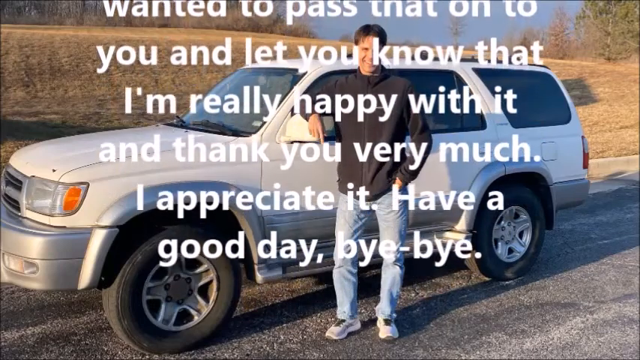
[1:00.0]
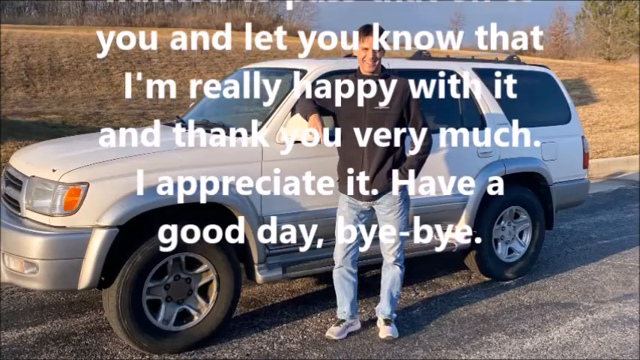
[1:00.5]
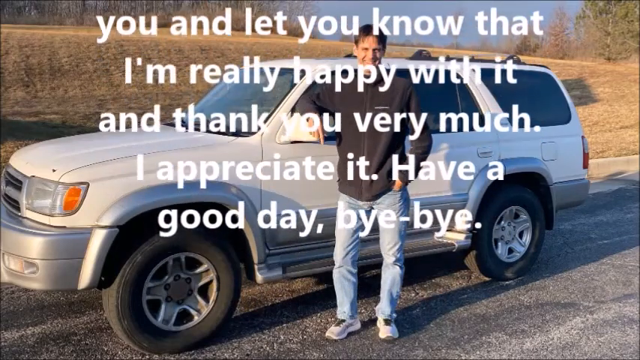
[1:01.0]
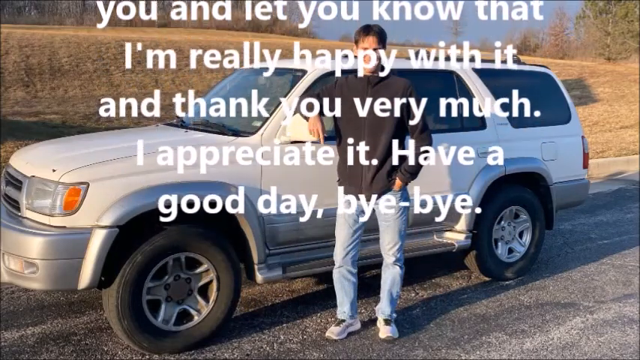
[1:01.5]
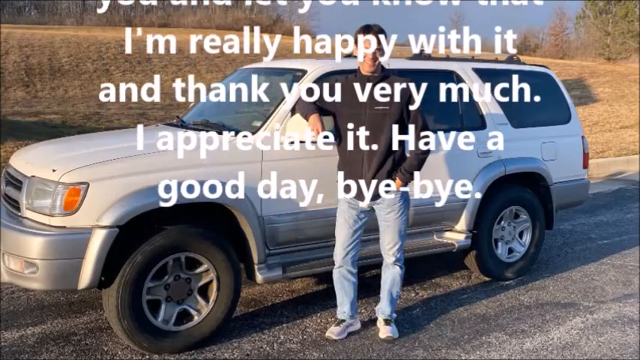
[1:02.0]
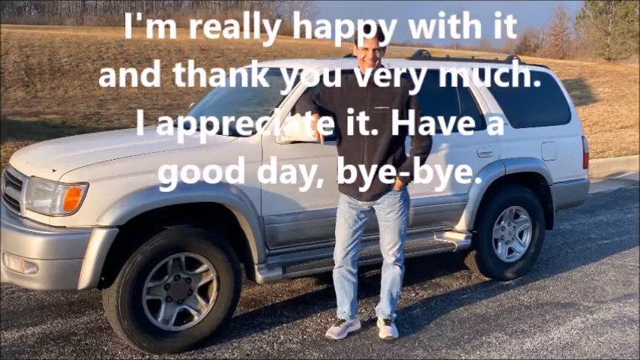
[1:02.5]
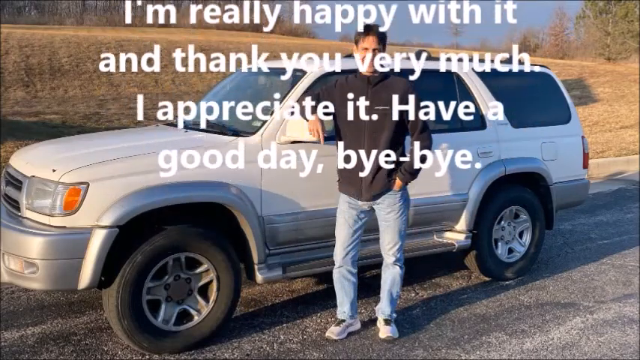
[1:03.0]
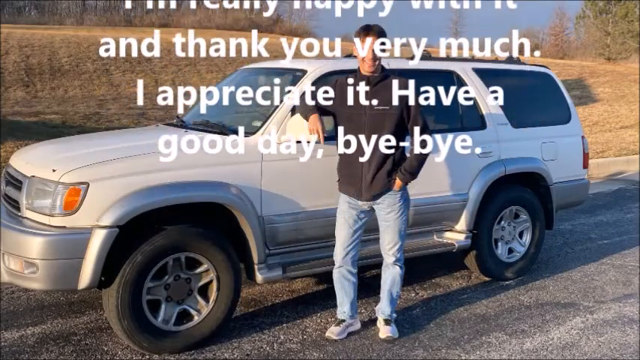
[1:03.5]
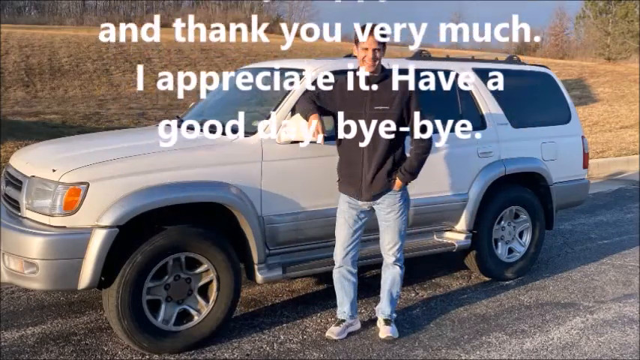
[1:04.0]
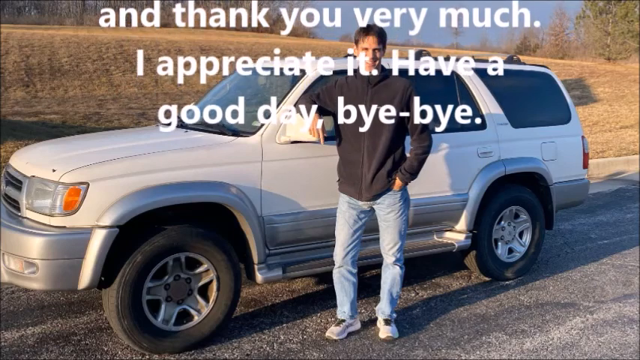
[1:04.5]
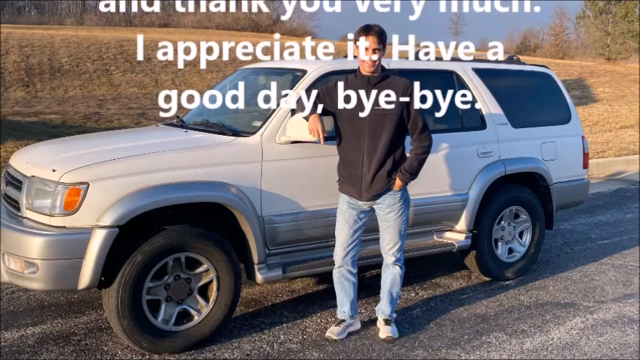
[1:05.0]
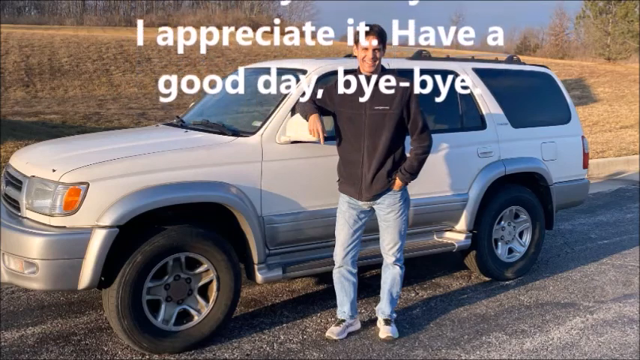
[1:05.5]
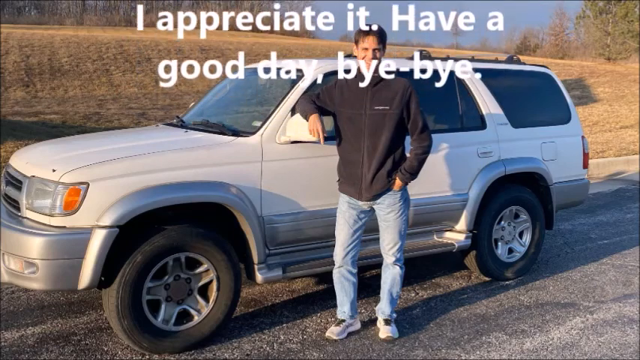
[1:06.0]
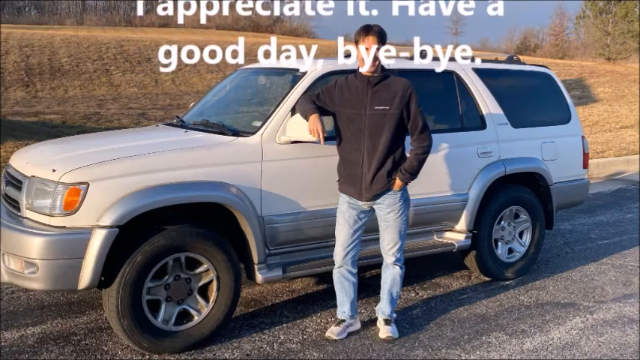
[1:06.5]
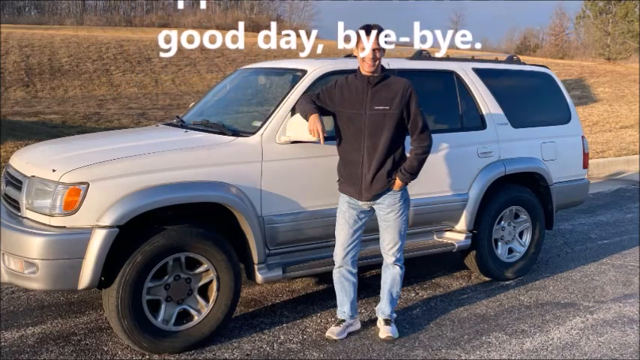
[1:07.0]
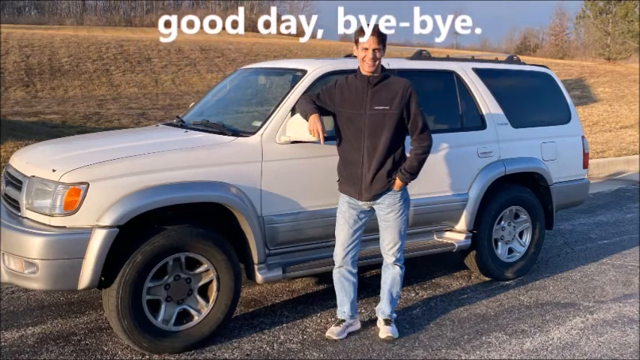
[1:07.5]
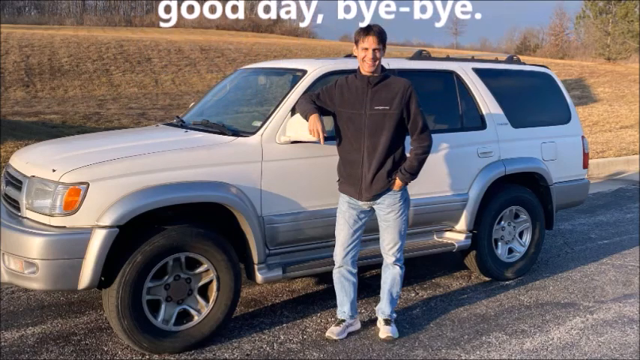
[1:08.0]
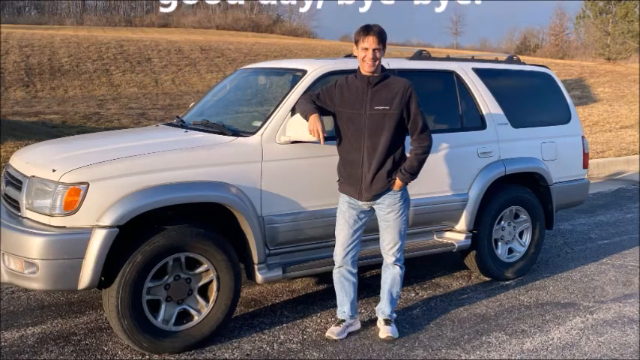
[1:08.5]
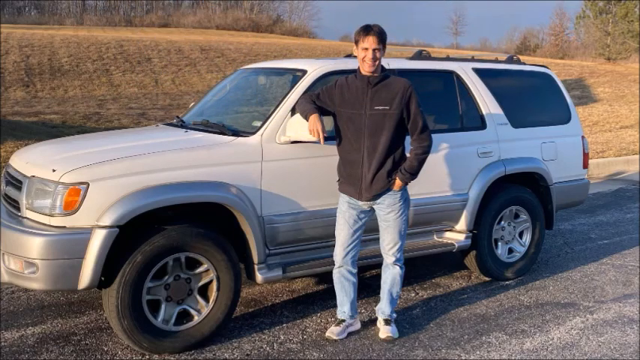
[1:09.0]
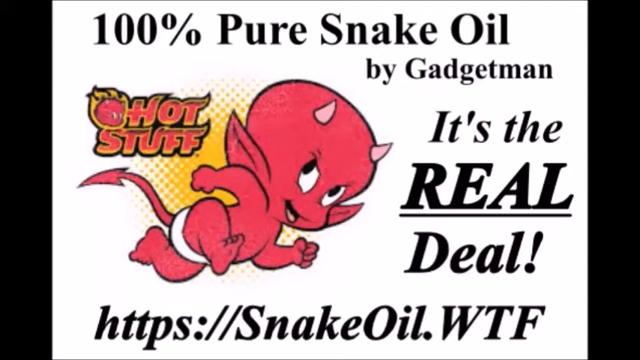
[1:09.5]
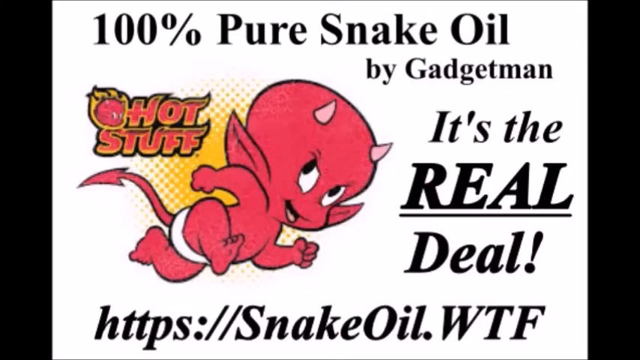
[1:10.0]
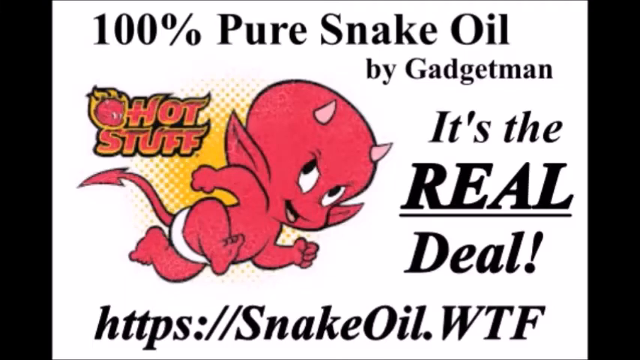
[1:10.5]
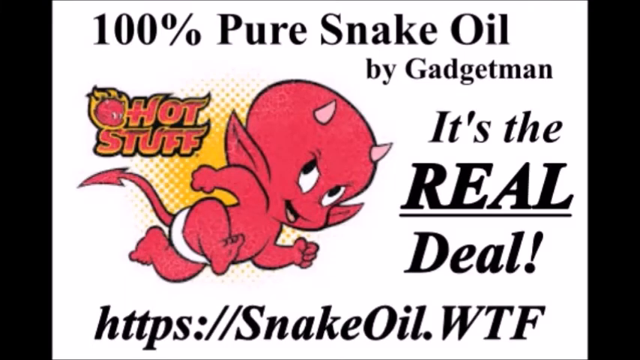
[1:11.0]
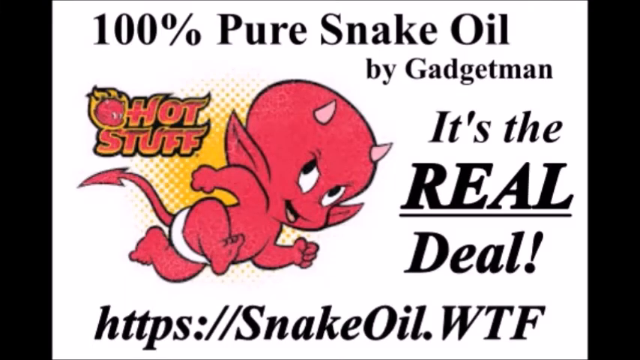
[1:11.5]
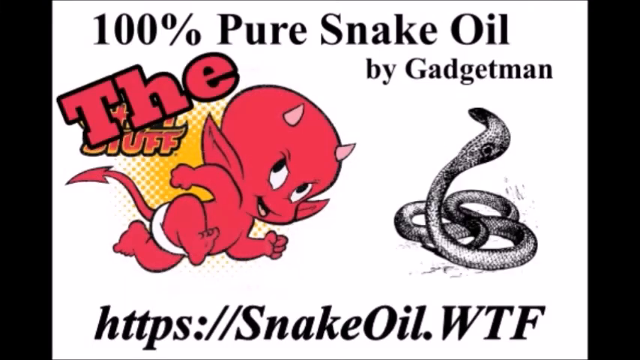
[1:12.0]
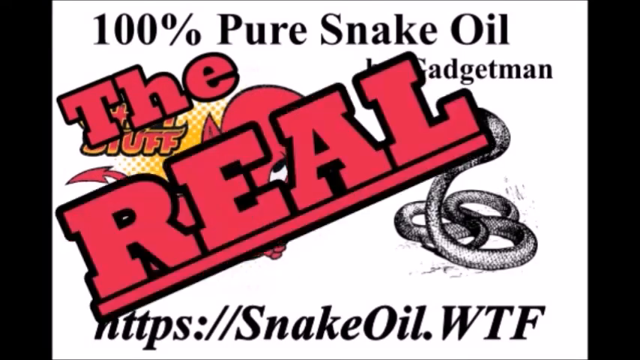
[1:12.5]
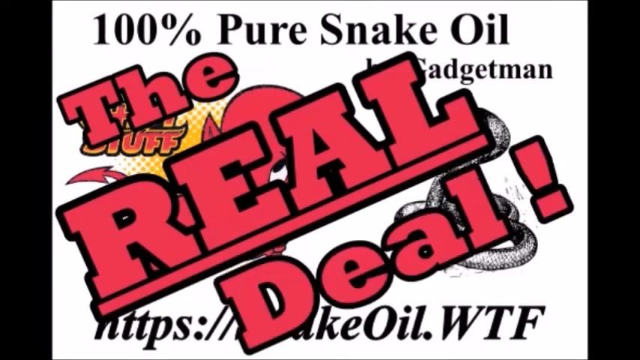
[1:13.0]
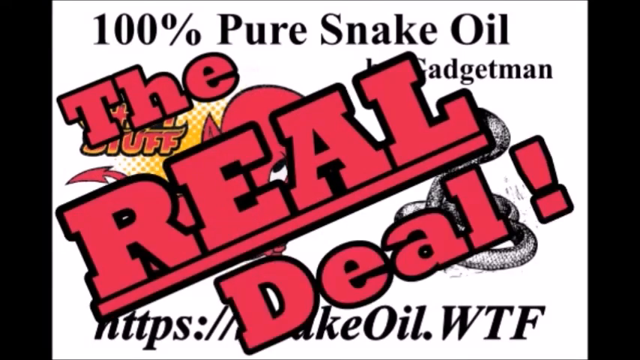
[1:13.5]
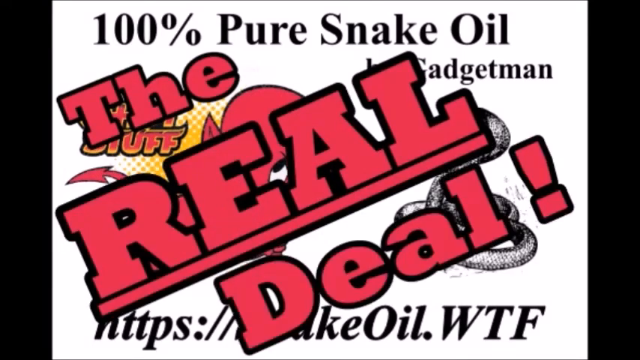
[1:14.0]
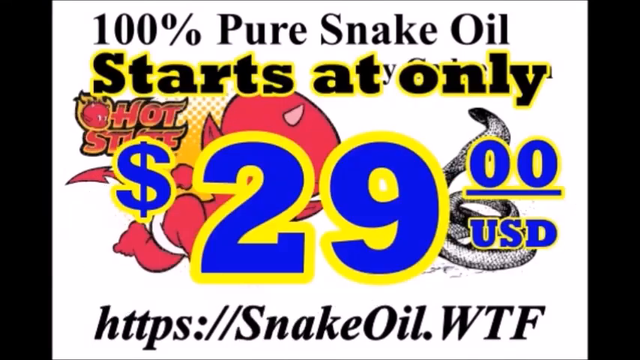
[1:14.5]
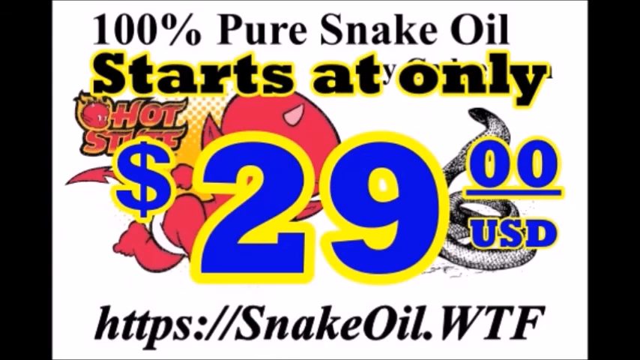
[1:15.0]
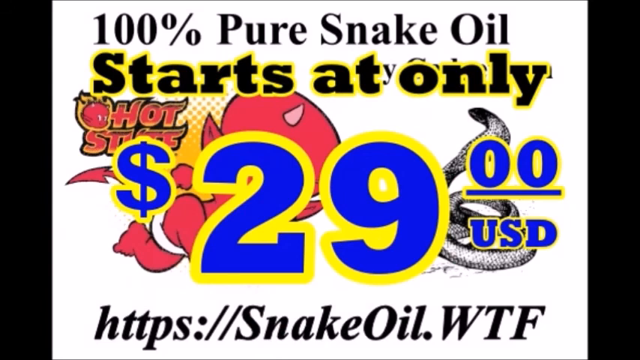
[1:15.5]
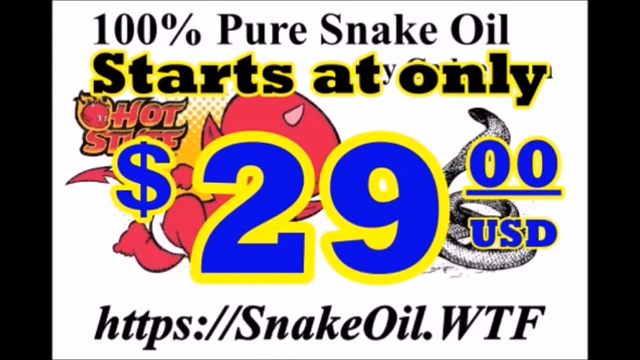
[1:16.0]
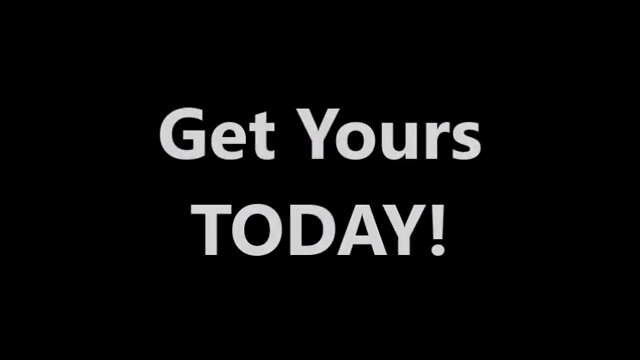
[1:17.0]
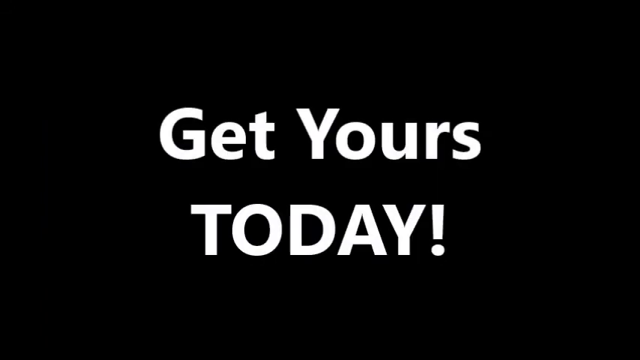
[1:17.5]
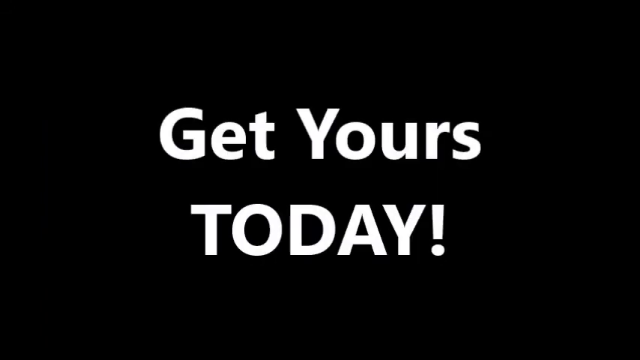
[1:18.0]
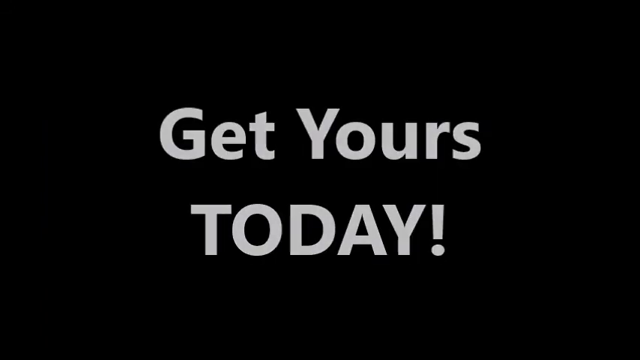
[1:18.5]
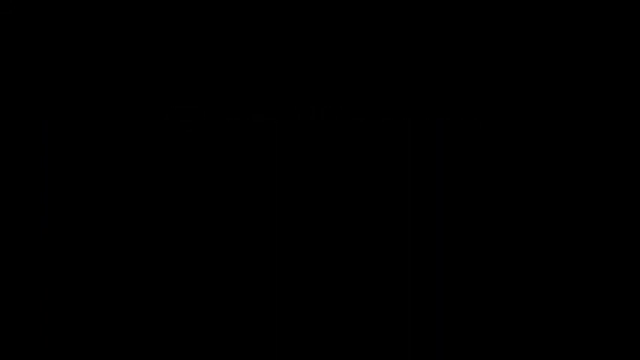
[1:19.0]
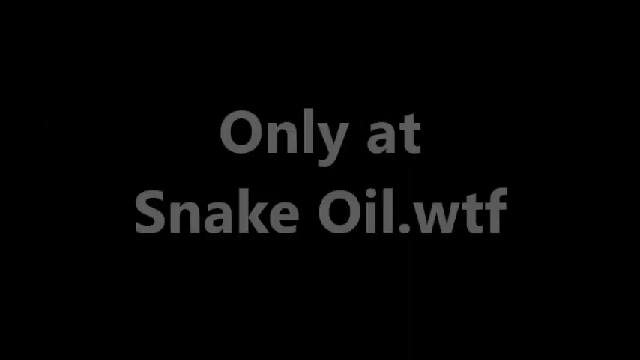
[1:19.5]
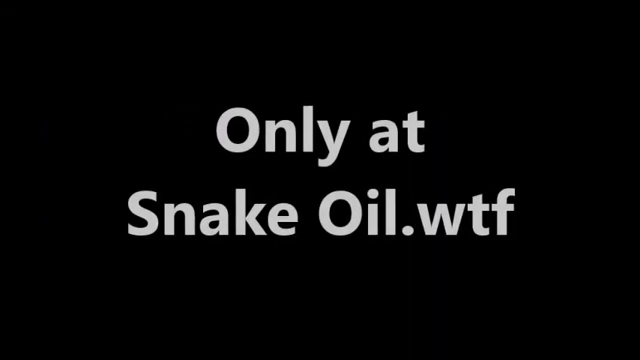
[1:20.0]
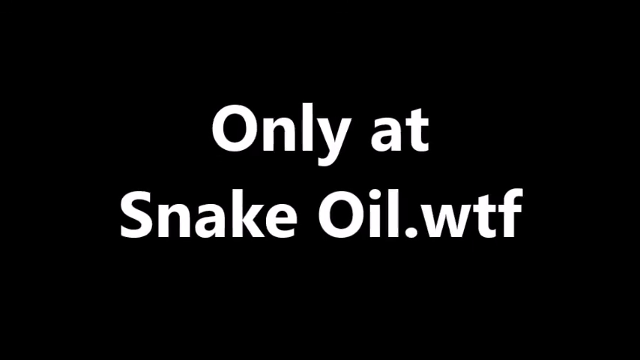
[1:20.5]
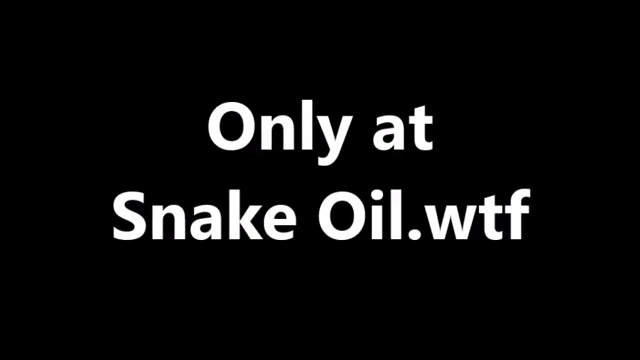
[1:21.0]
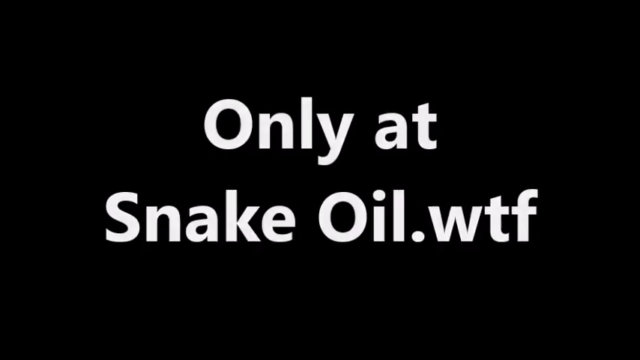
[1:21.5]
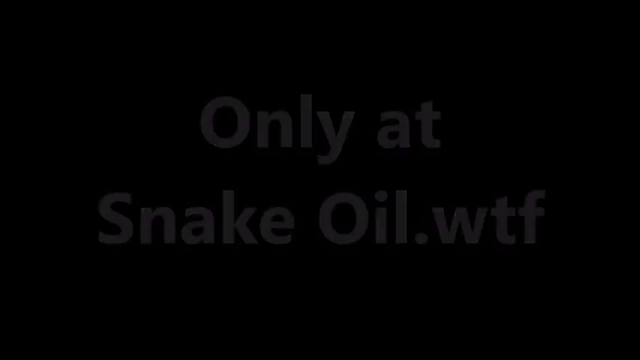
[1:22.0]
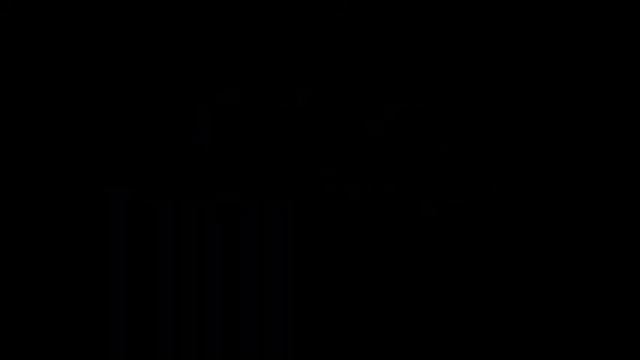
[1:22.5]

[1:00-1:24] A man stands in front of a white SUV with his arm resting on the driver's side mirror. He wears blue jeans and a black zip-up jacket, has brown hair, and is smiling, looking directly at the camera. They are on what appears to be a rough asphalt or possibly gravel road or parking lot. Behind is a hill with short-cut brown grass, and trees are visible on the ridge, possibly a small forested area, with a portion of blue sky beyond. White text on the image reads "thank you very much. I appreciate it have a good day, bye bye", scrolls up the screen, and disappears. The video then transitions to an image on a white background with black text reading "100% pure snake oil by gadget man it's the real deal HTTPS://snakeoil.WTF". There is a picture of a small devil running in a white diaper, with "hot stuff" in red and yellow font next to it. The text "starts only at $29 USD" then pops up on the screen. Next, a black screen shows white text reading "get yours today! only", and a different screen follows reading "only at snake oil.WTF".